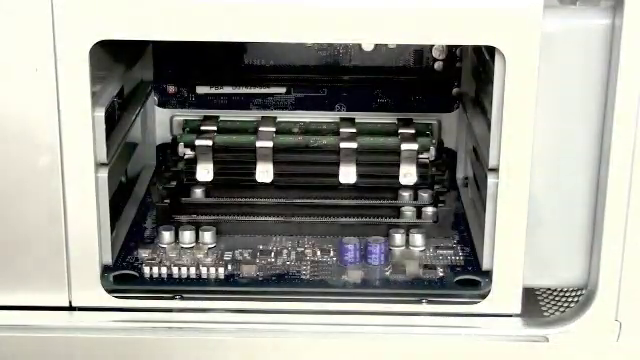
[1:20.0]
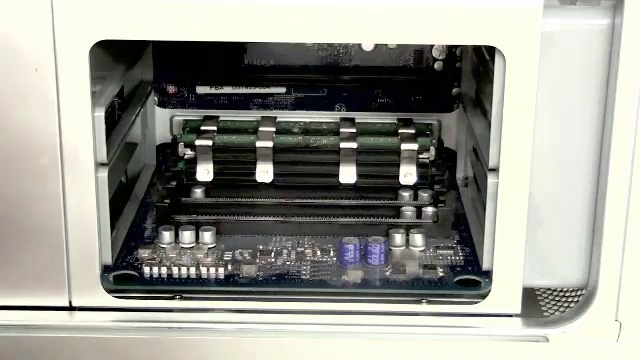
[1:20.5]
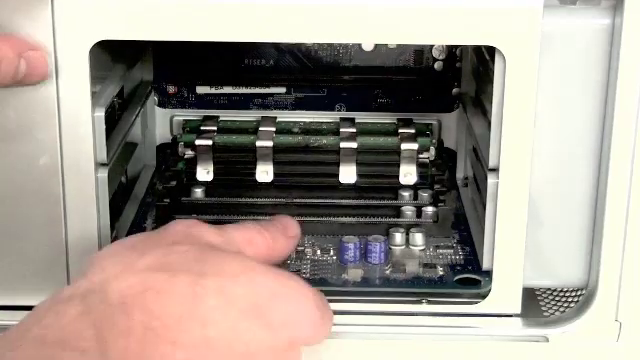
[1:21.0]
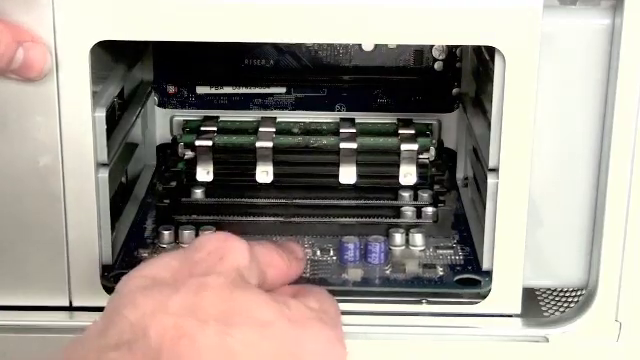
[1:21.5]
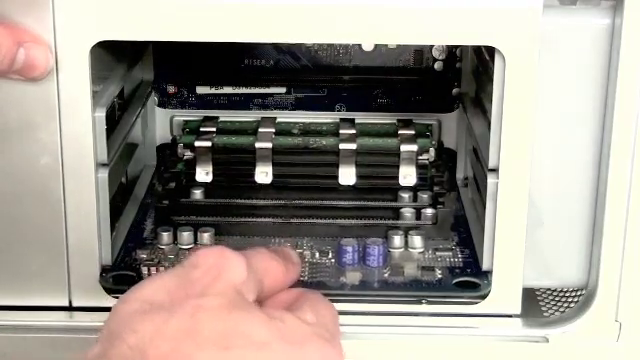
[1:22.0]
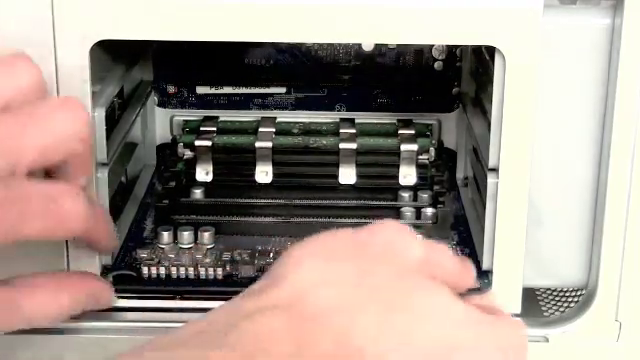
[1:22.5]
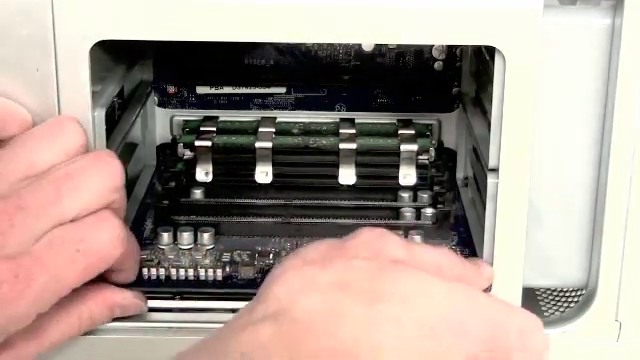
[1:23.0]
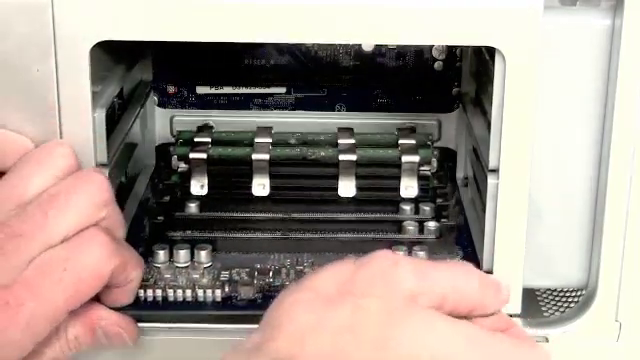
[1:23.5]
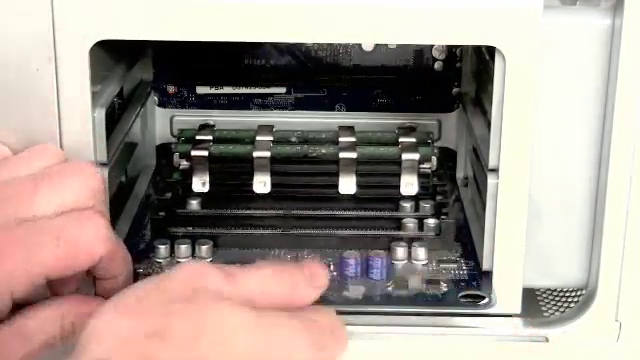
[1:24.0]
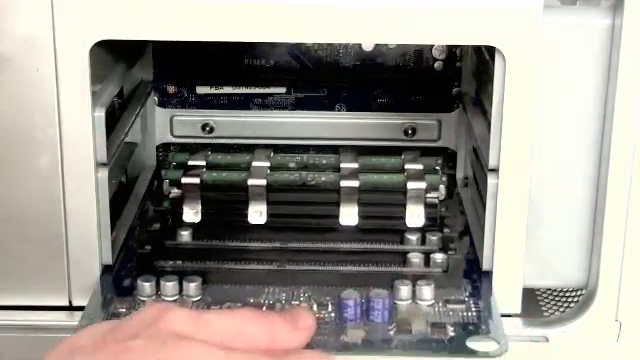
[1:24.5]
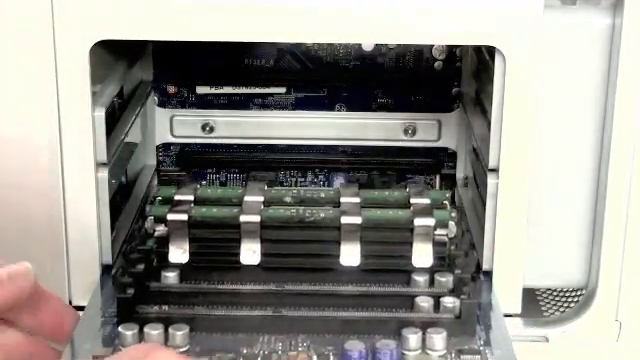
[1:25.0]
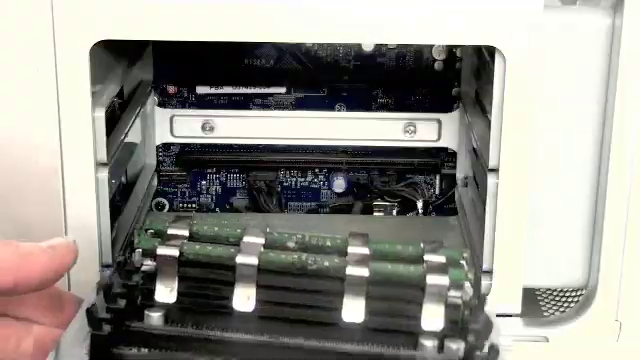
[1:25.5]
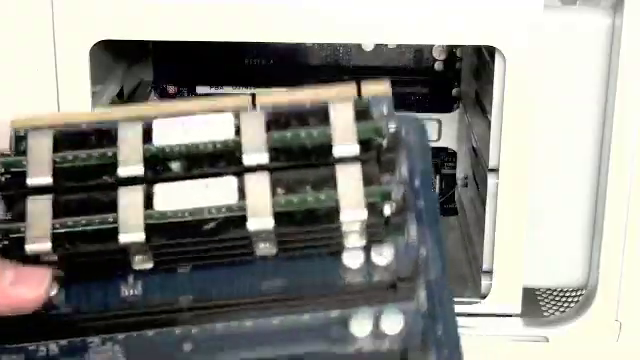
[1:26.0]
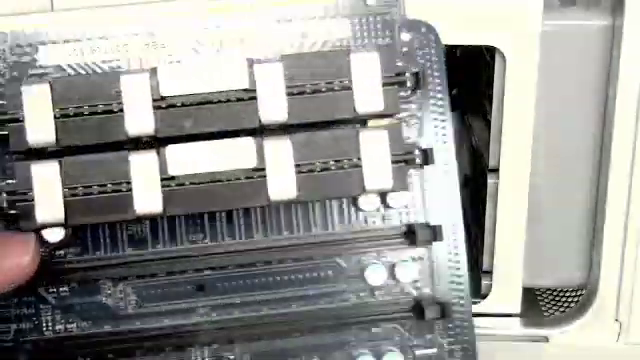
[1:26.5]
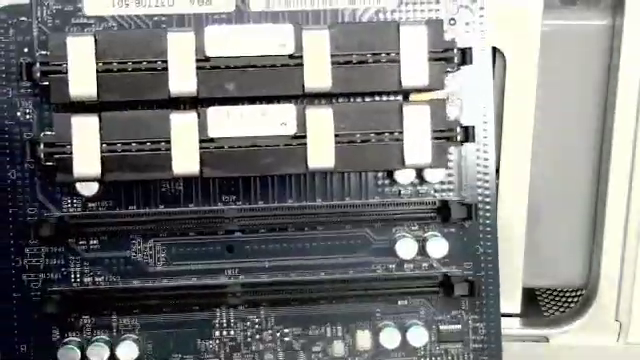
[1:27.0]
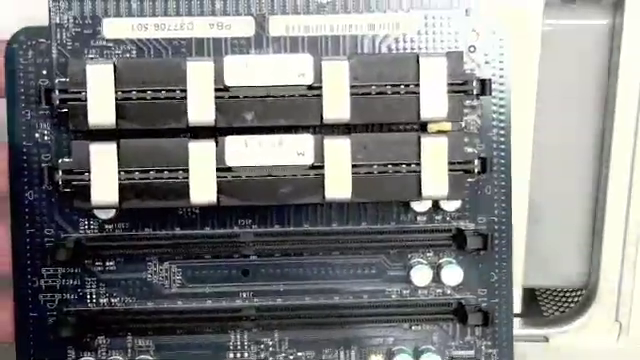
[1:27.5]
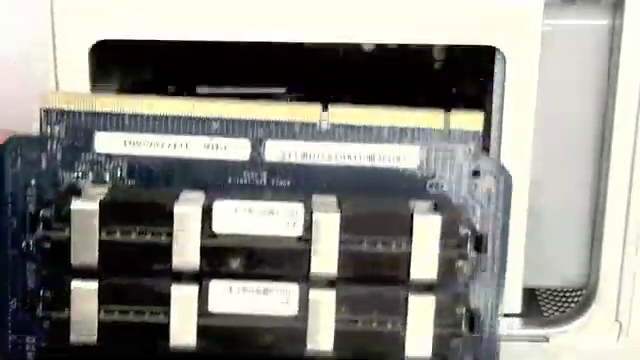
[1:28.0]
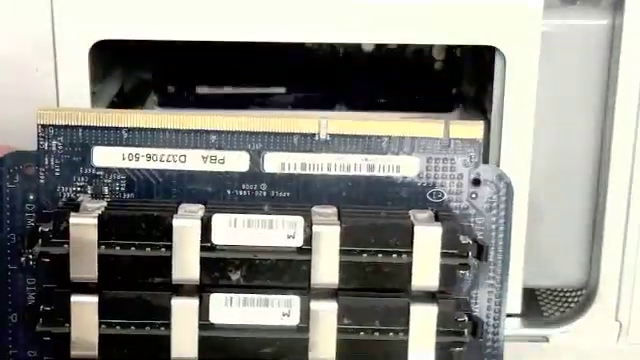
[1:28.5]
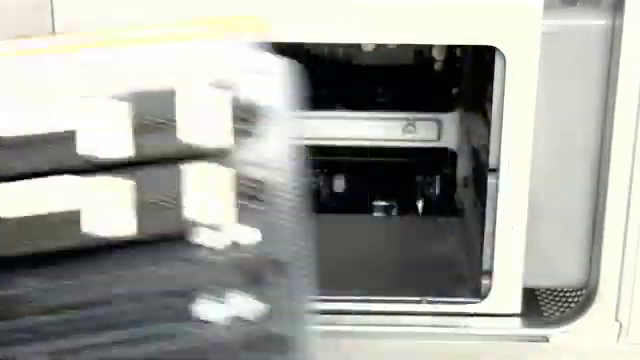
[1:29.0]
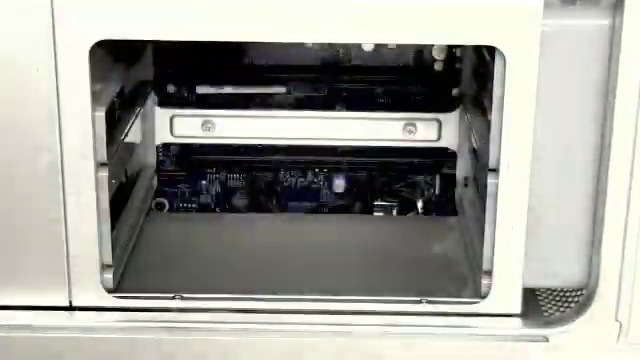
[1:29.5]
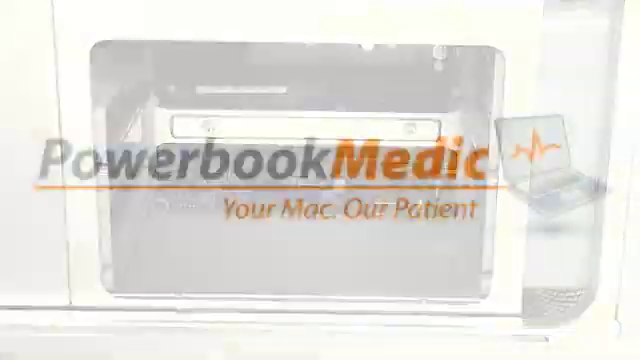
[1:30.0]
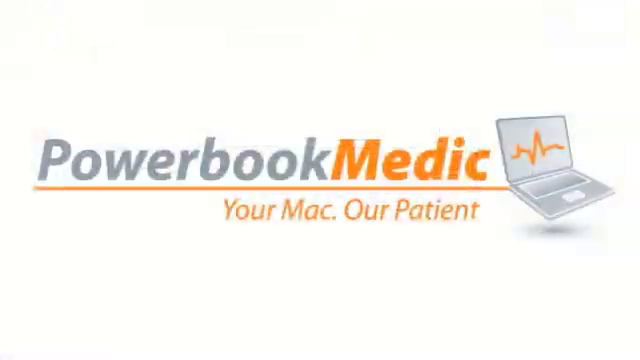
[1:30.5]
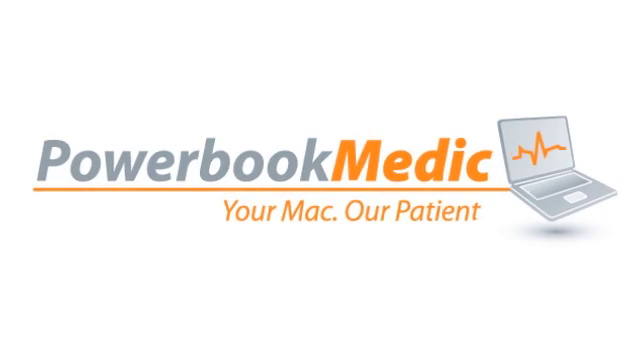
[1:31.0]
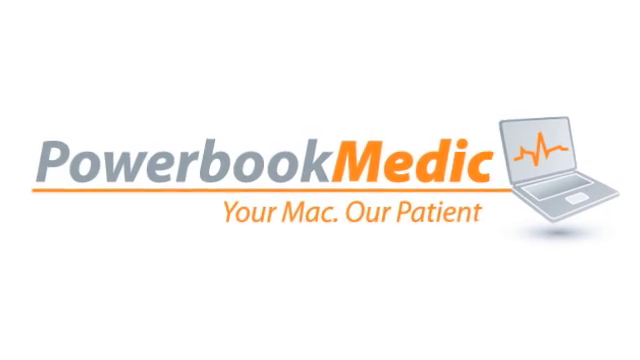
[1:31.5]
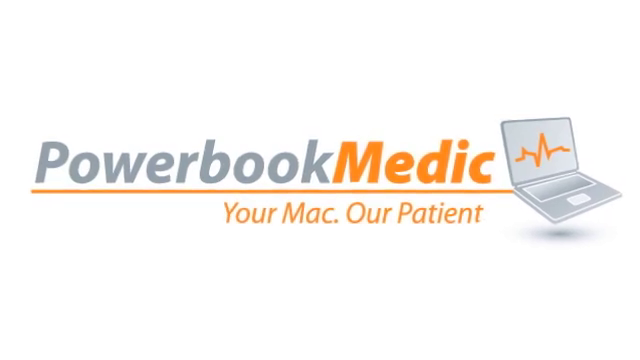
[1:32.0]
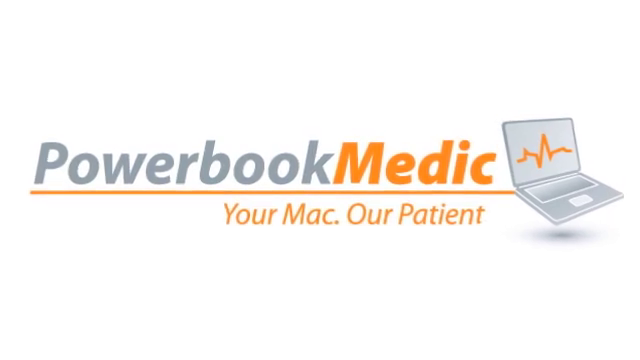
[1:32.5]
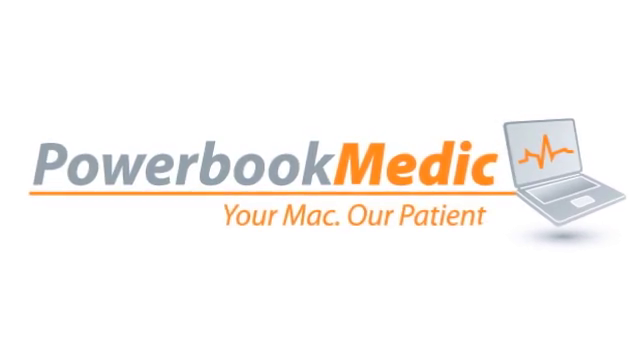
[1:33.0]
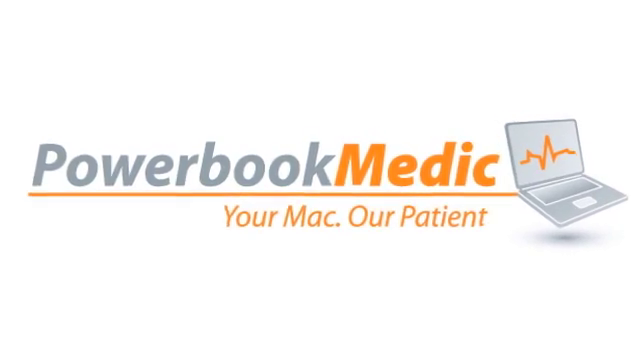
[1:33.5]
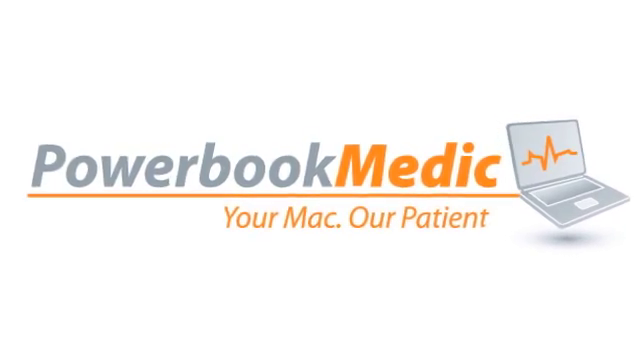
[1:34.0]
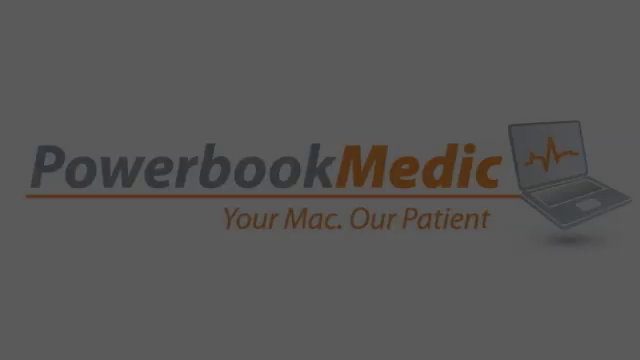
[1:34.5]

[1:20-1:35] The man brings his right hand down and jiggles the bottom part inside the computer, then his left hand comes down as well and helps guide the part out. He pulls it up and slowly shows it to the camera from every angle. Afterward, the area inside the Mac Pro computer is empty, with no part inside. The screen then turns white with the PowerBook Medic logo and the words "Your Mac, Our Patient" in orange text, and the video comes to a close.